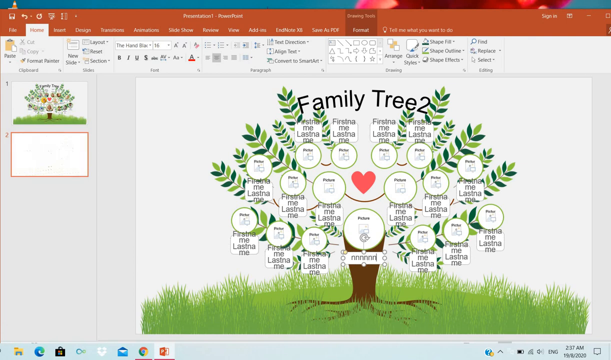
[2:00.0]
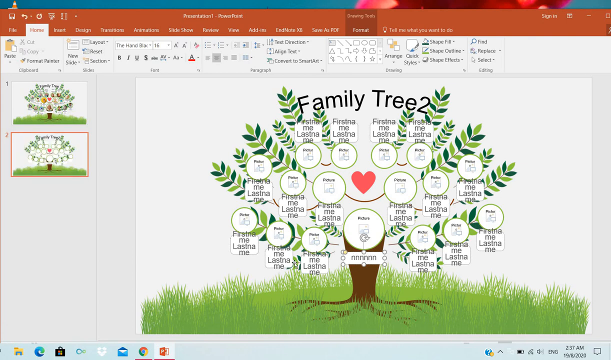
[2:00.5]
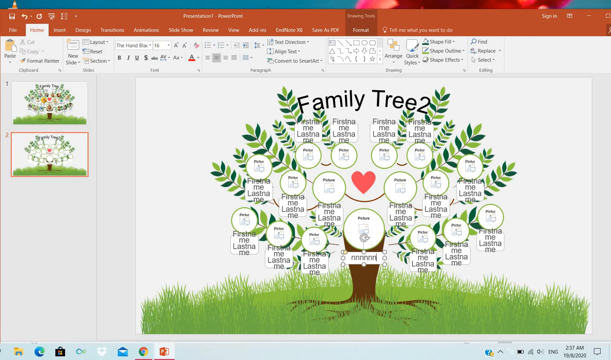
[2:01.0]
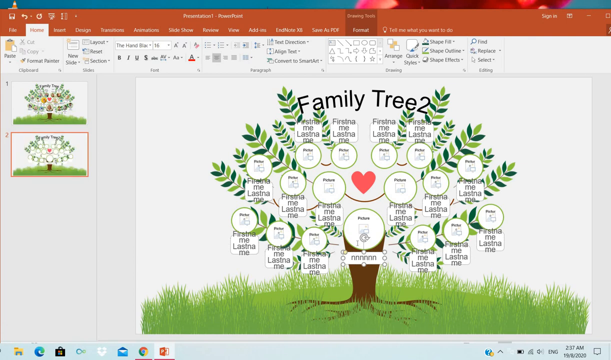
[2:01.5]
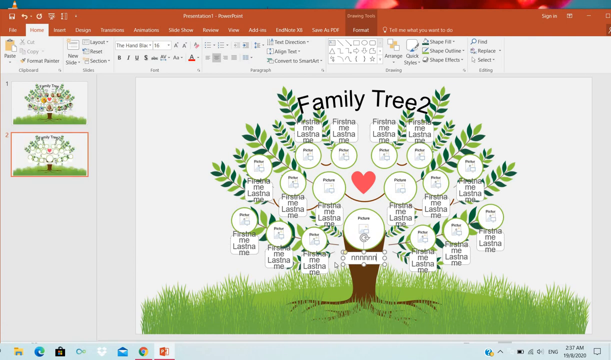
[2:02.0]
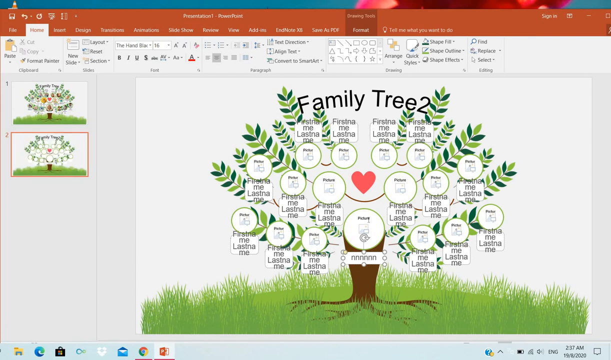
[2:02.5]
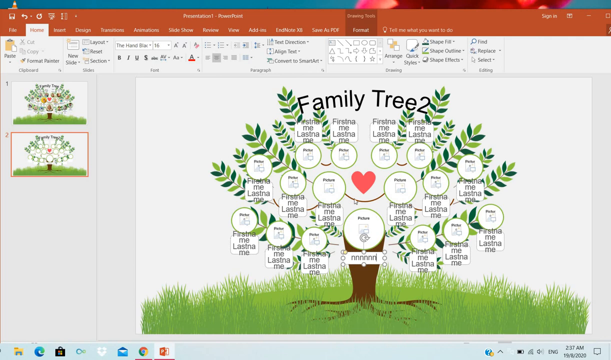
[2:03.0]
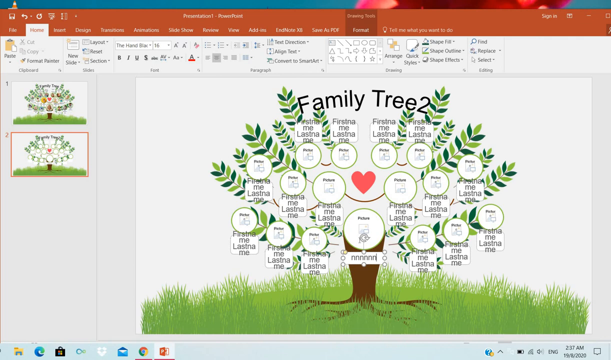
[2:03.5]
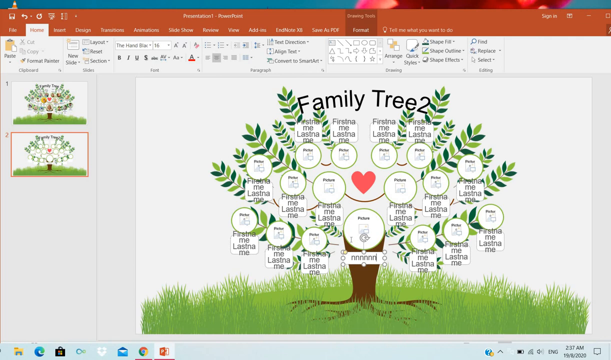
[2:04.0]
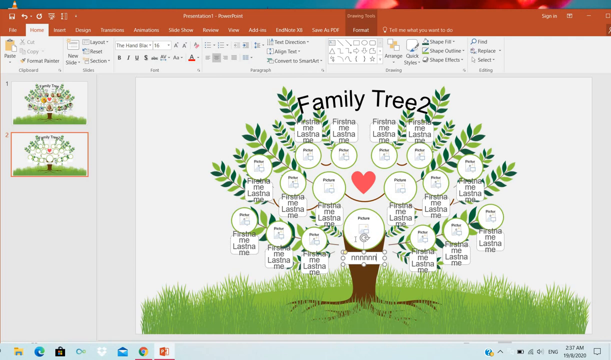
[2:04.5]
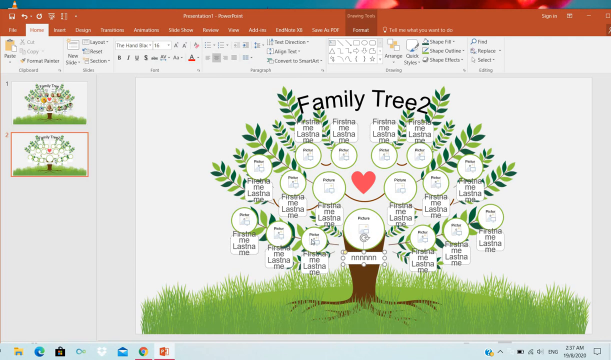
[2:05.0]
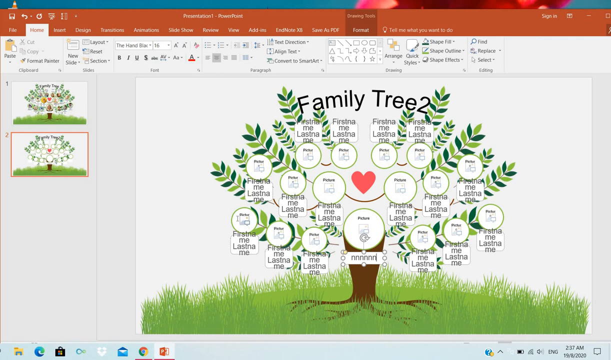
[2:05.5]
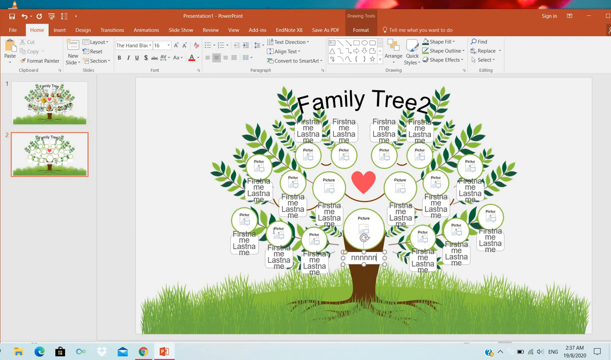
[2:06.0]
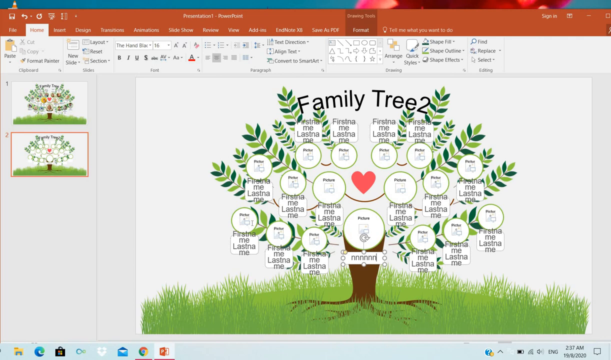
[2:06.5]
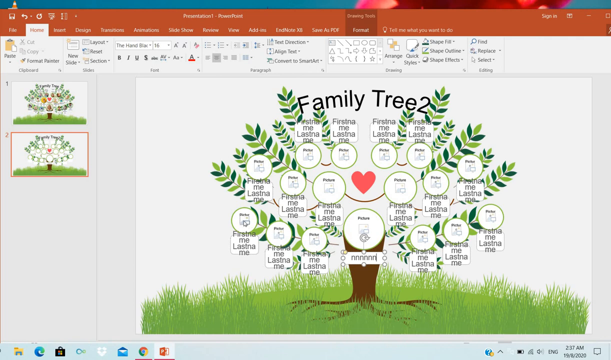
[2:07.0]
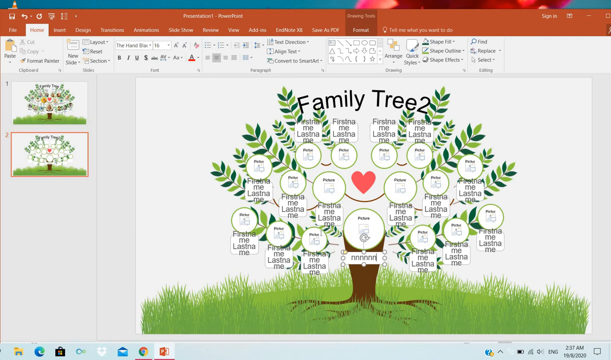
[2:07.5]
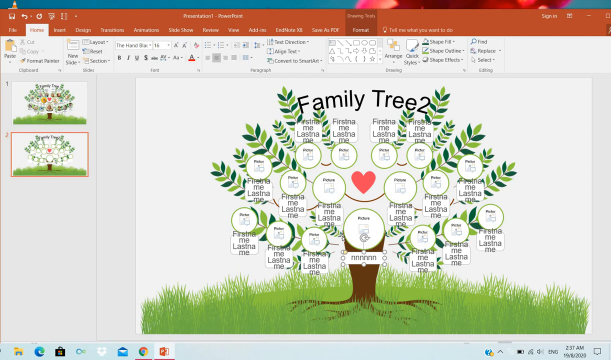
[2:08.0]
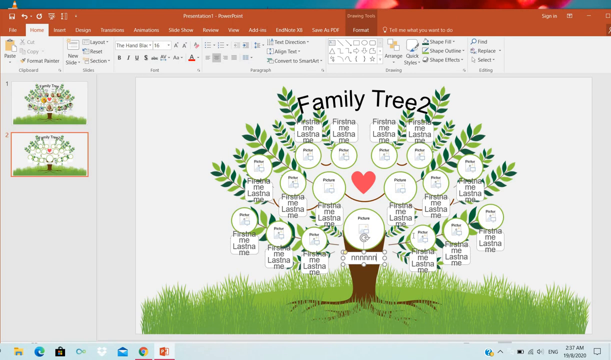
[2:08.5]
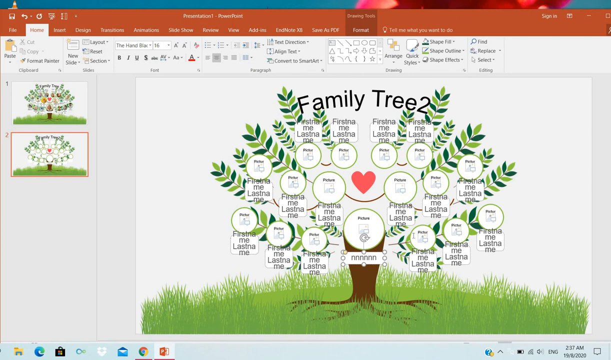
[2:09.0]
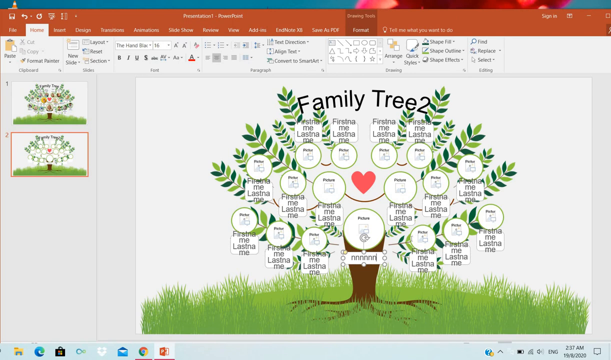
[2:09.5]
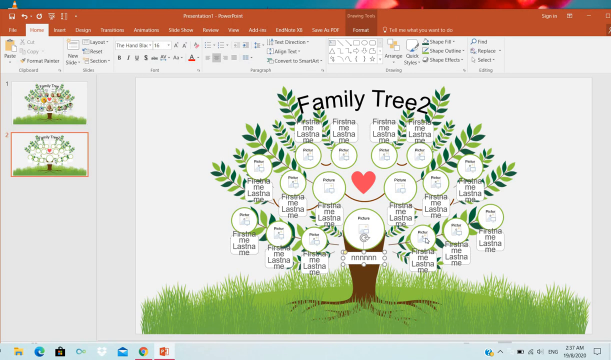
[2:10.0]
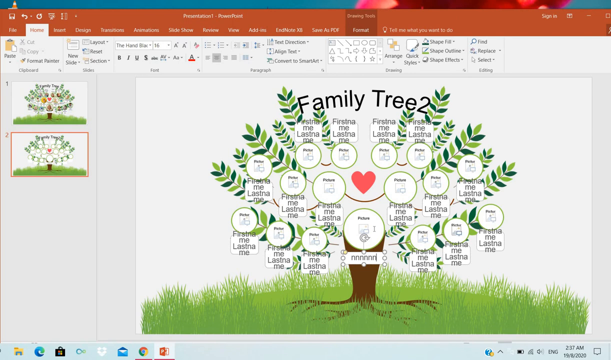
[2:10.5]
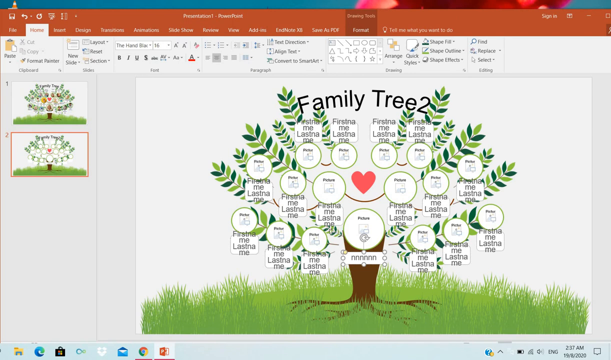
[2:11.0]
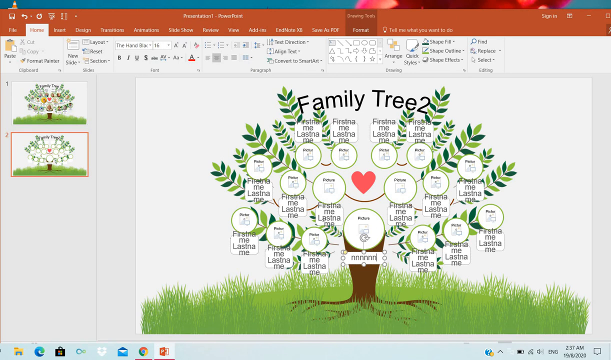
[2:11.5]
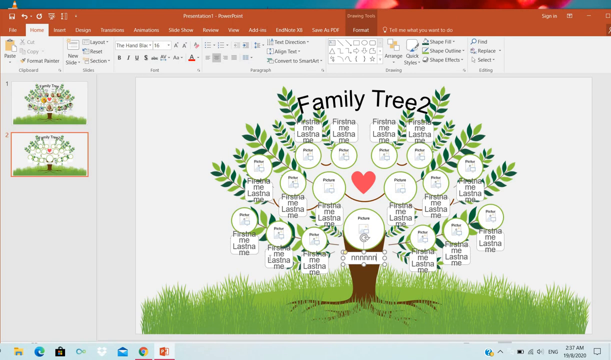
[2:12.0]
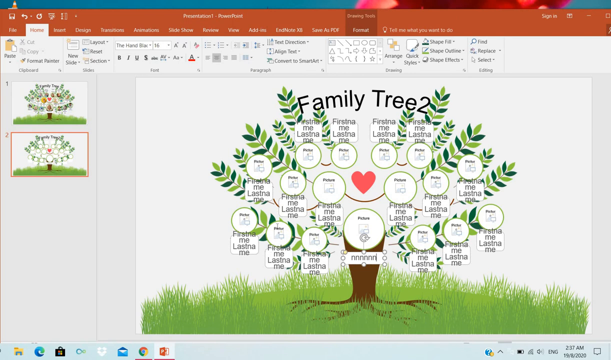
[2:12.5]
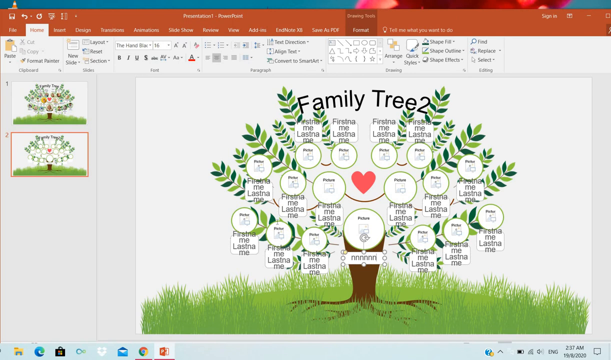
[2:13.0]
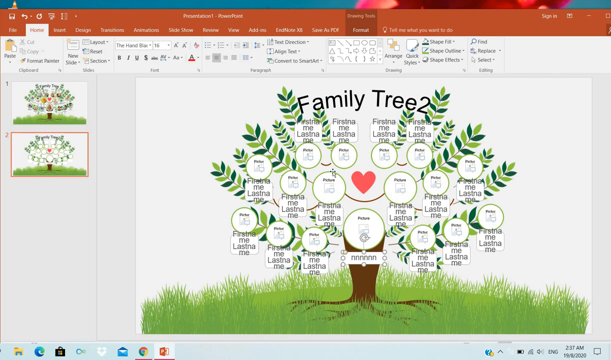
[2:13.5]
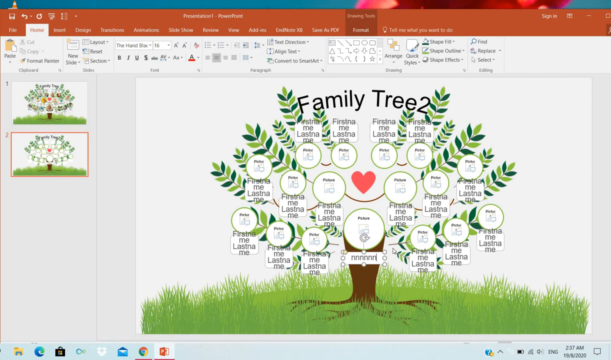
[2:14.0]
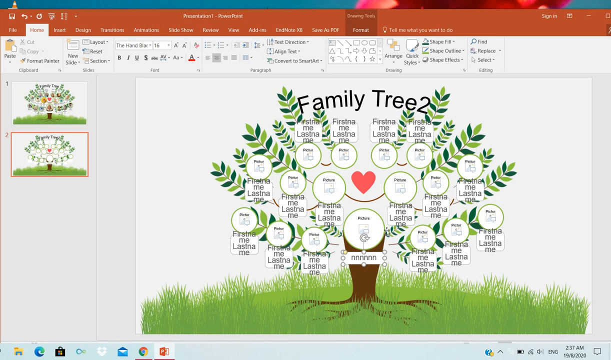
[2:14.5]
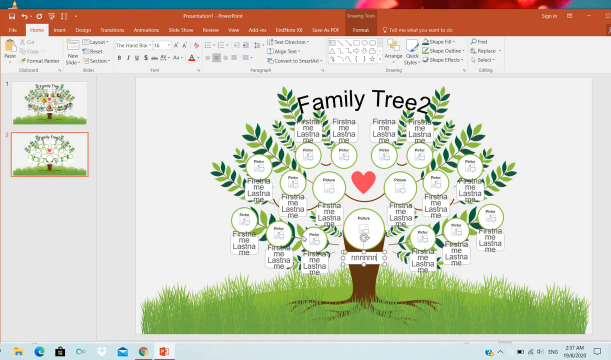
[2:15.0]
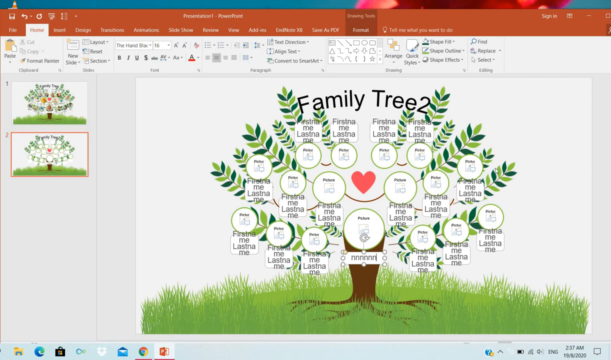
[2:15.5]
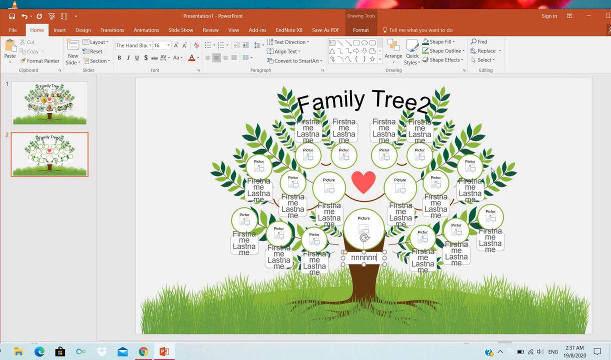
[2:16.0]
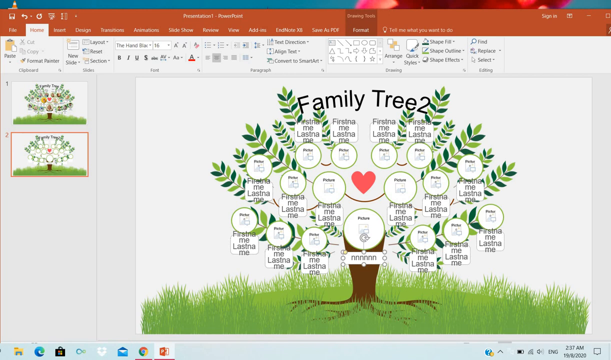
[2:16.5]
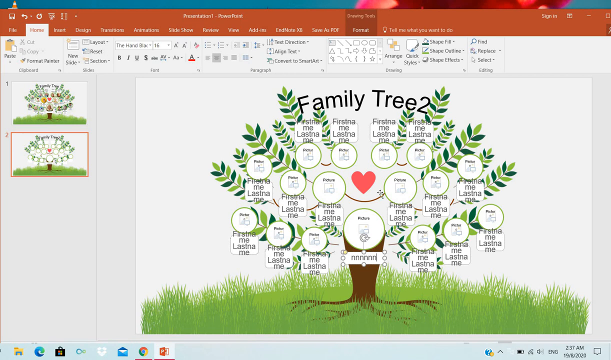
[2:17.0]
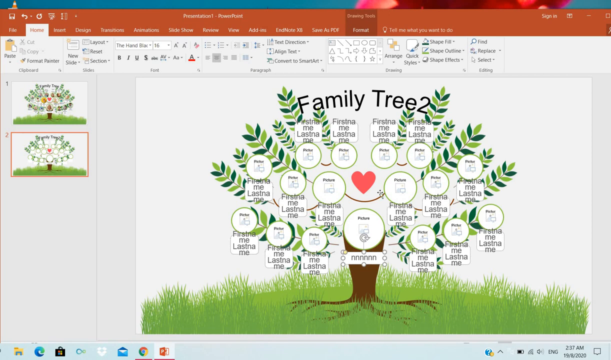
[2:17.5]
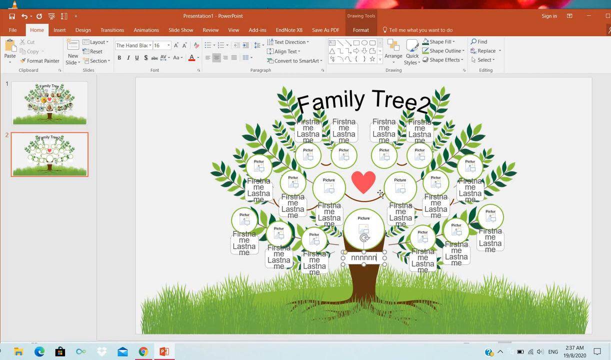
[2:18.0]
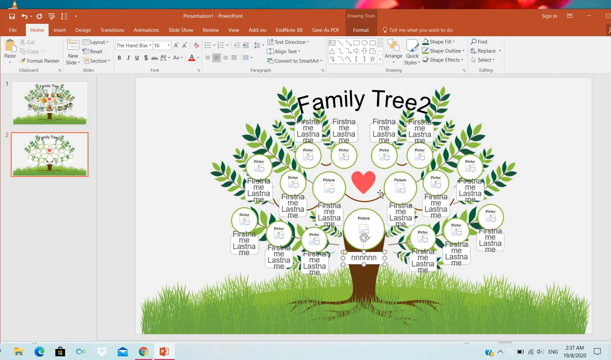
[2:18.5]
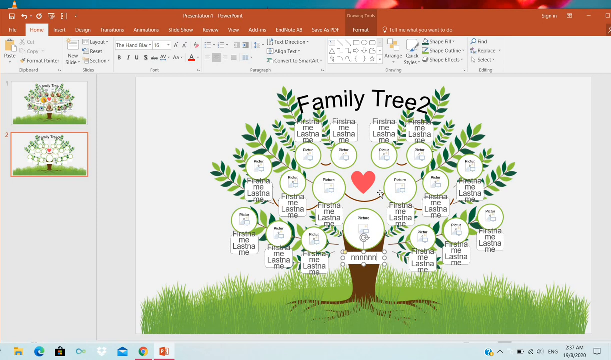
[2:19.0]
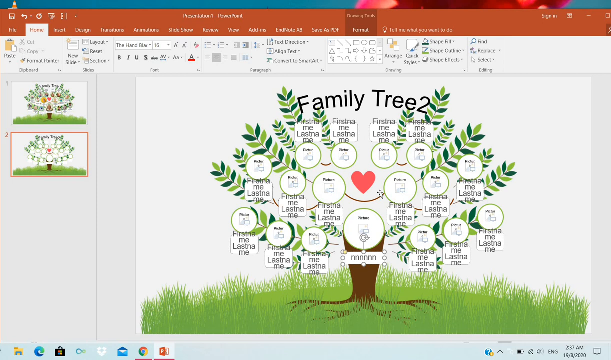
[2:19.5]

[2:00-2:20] Under the largest circle, which is in the middle of the tree trunk and from which the other circles are shaped, the person has typed a nonsensical string of random letters, which looks like a row of six or seven n's. The mouse then moves all over the place from one circle to the next in no particular fashion, possibly as part of a demonstration of how to use the template. The picture folder is opened again and then closed.